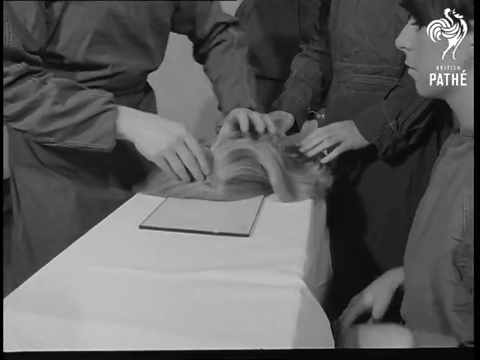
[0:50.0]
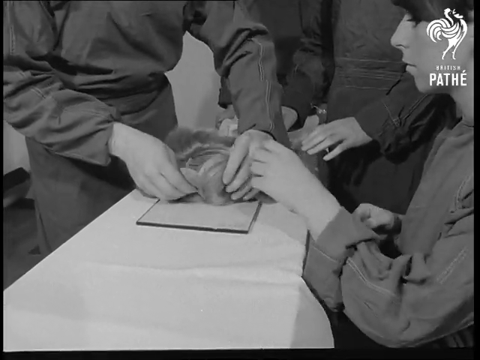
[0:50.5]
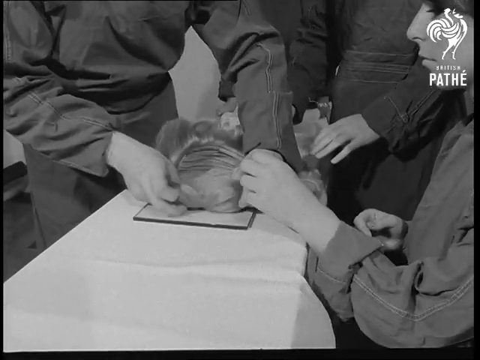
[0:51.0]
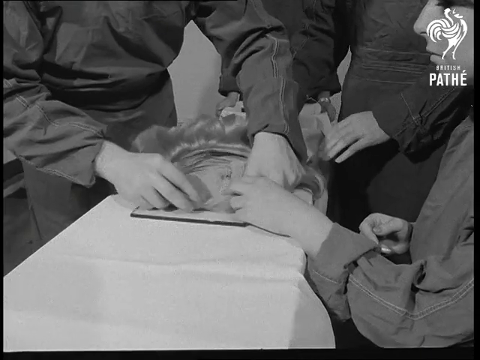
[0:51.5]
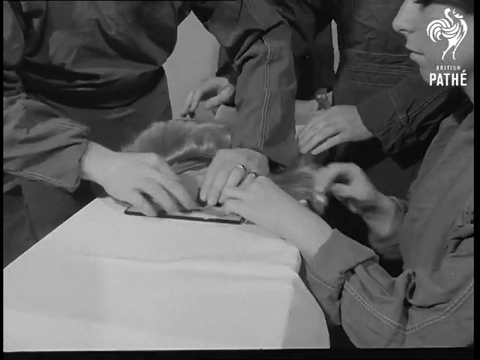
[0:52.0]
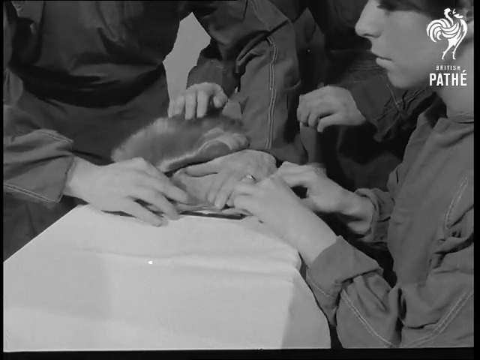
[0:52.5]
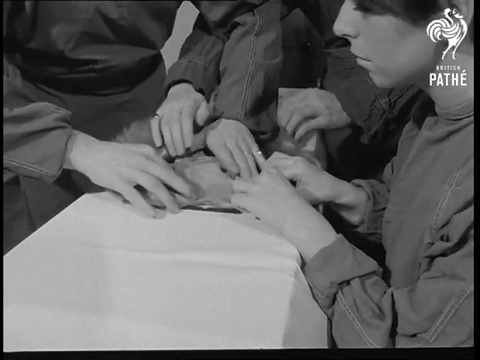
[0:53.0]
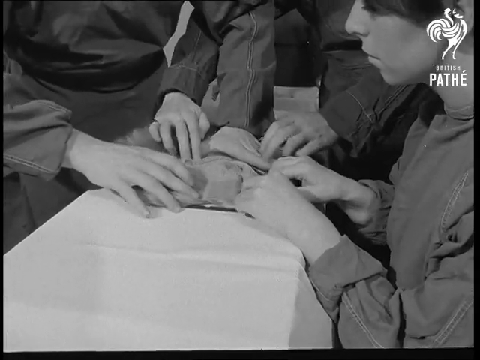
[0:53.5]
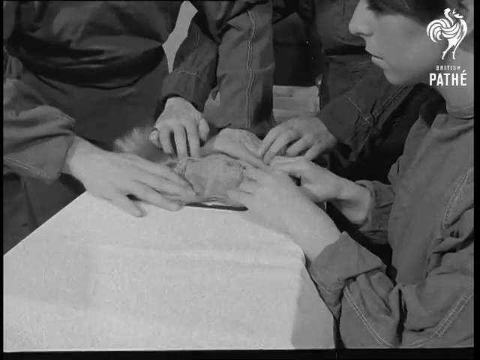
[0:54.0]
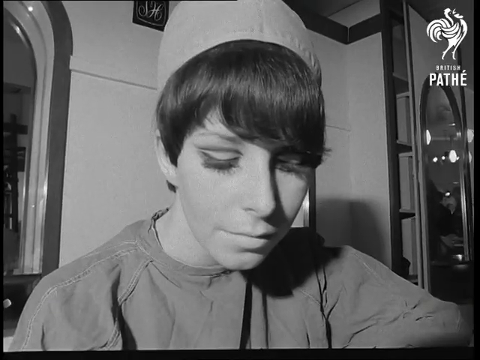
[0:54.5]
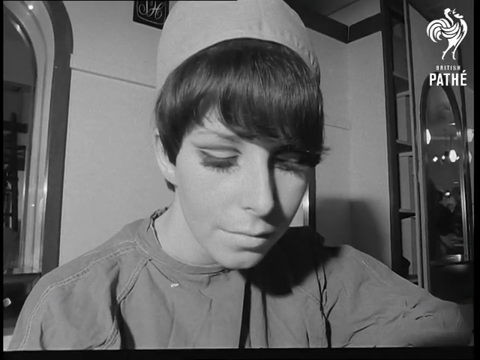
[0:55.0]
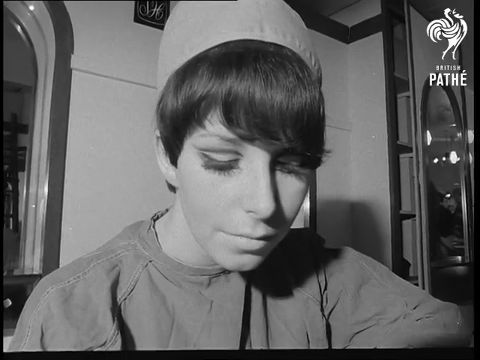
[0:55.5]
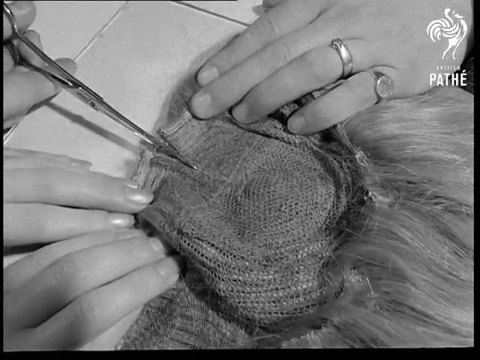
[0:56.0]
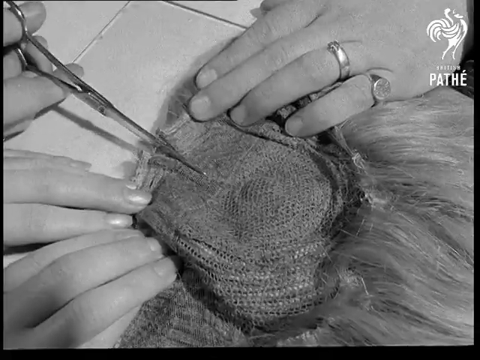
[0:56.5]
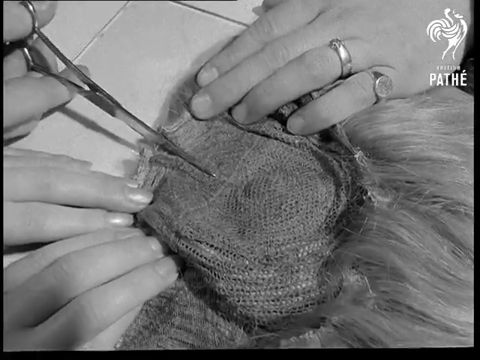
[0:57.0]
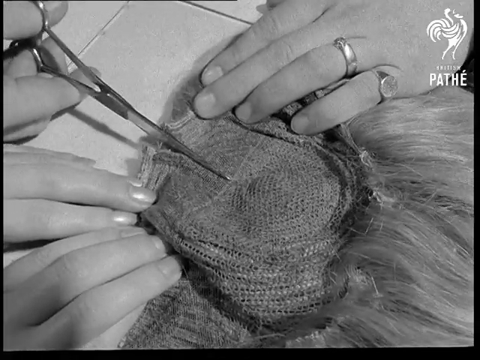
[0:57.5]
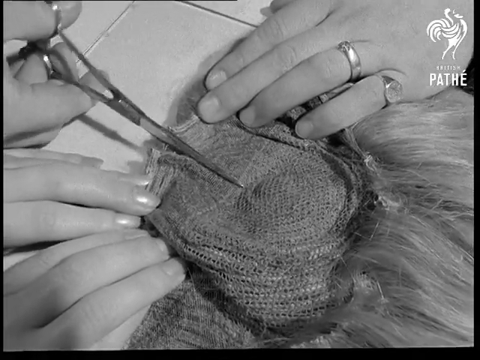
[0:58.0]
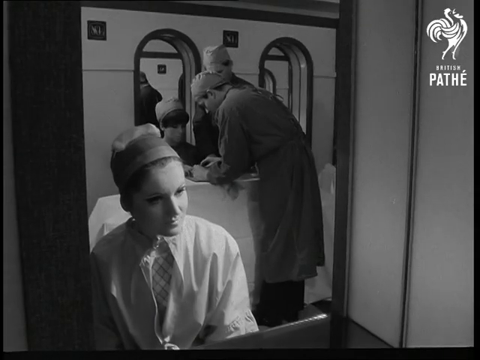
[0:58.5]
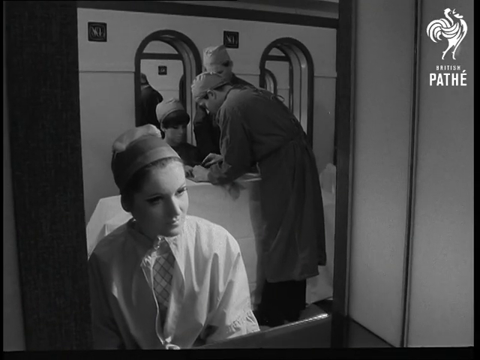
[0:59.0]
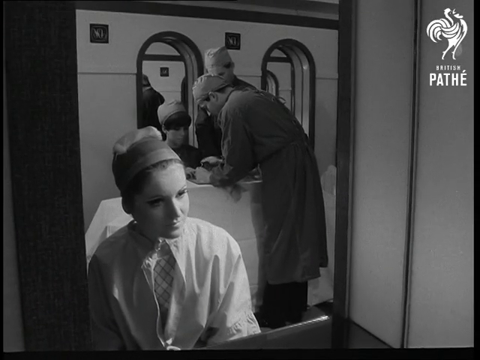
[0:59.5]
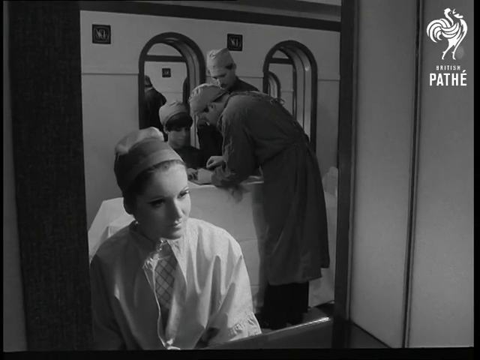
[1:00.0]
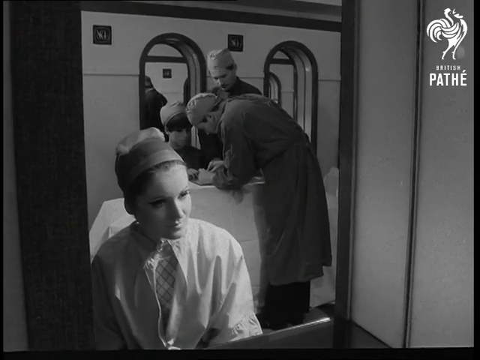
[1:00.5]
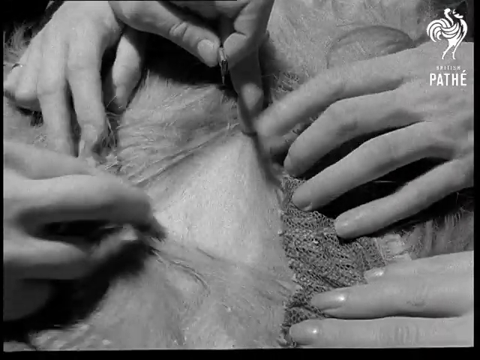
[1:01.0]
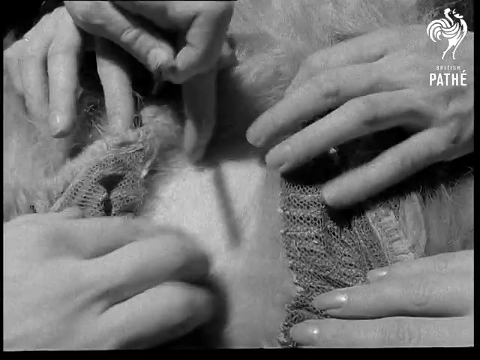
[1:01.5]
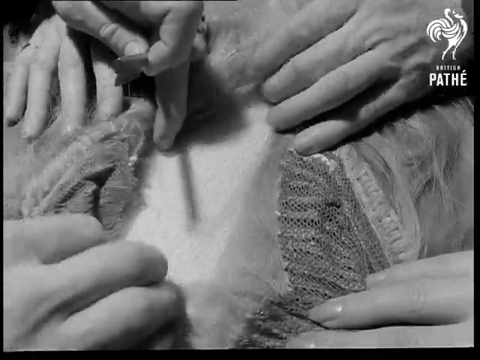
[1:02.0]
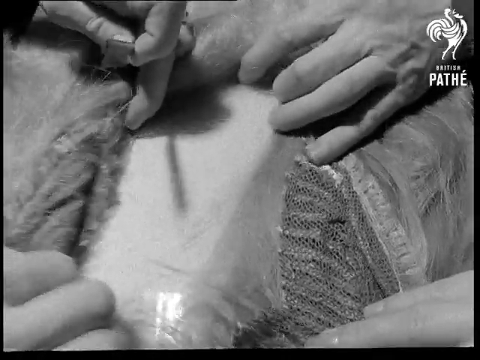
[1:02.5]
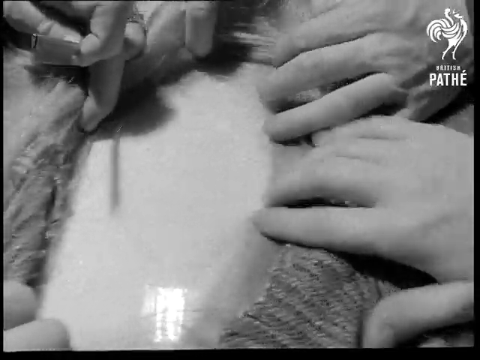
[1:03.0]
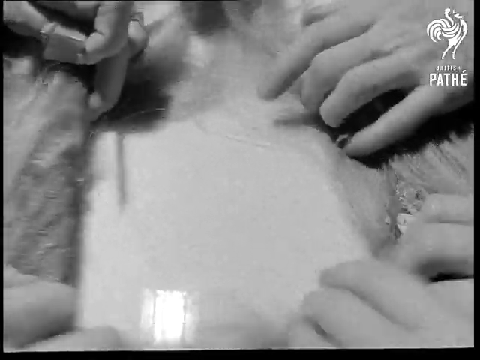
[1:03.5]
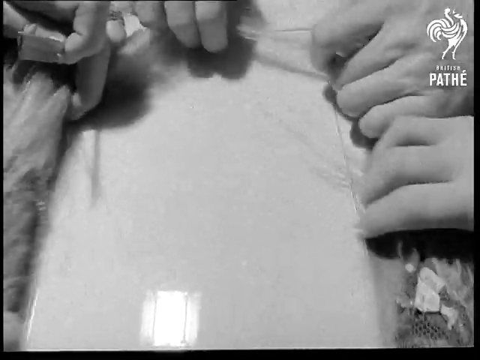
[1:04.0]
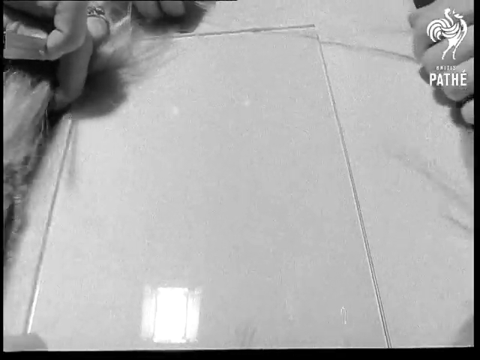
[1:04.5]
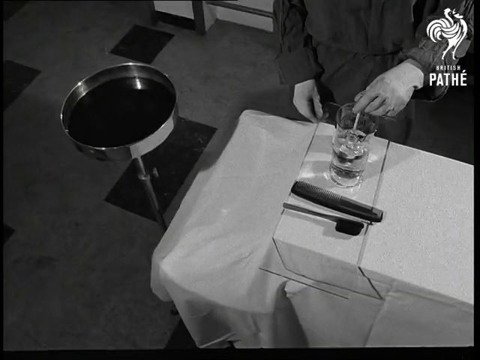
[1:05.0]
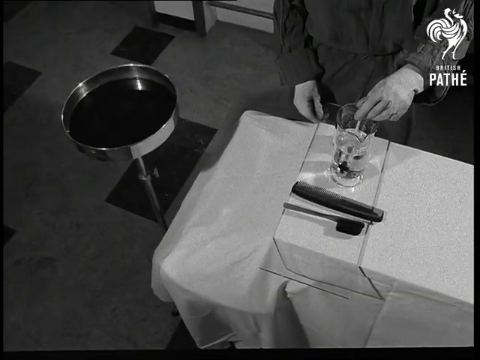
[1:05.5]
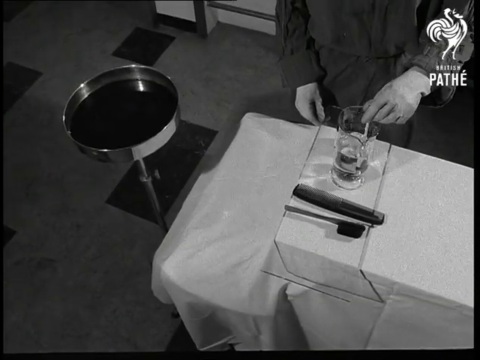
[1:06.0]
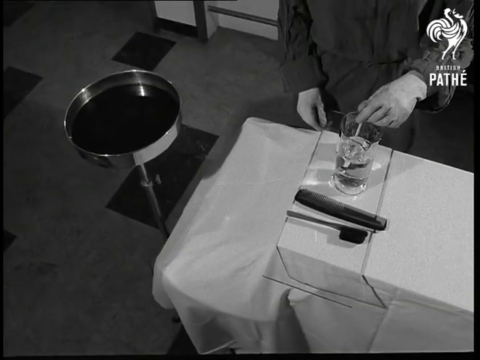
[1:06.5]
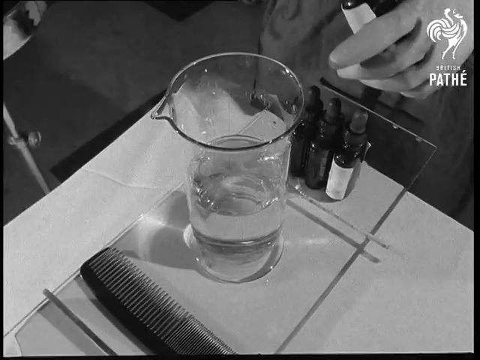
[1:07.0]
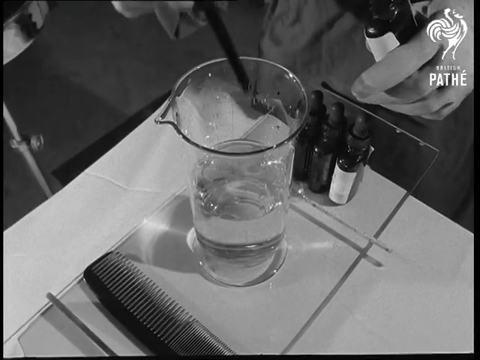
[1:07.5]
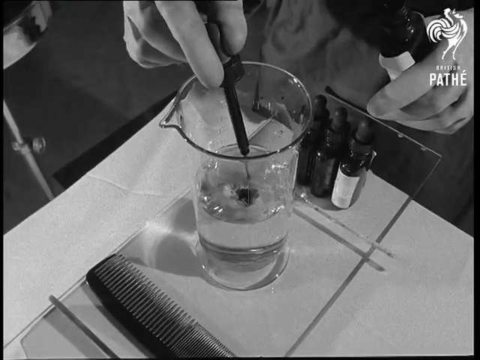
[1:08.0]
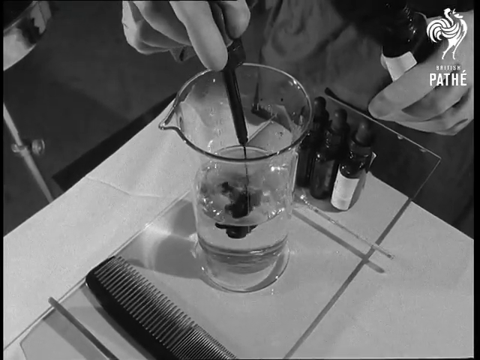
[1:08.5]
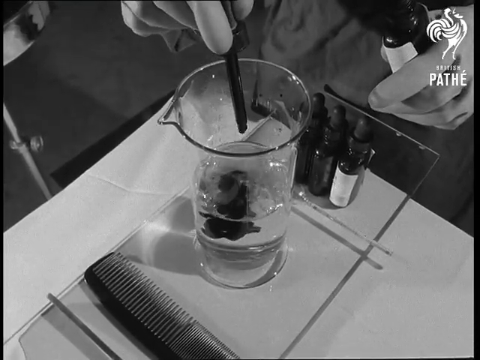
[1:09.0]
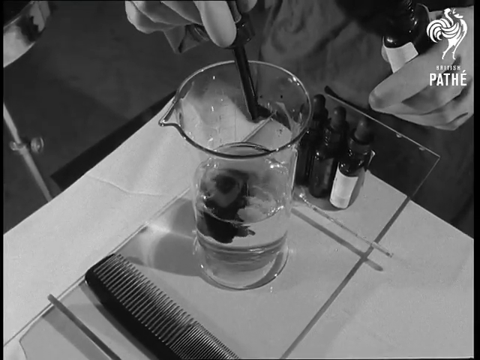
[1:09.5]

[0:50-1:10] The man in the surgical suit places the blonde wig on a table where three people stand. A woman on the right side, closest to the screen, sits down. She, the man in the surgical suit and the third person each hold the wig in a different location, as if to make it lay flat. A close-up shows a woman with short dark hair and long eyelashes wearing a surgical hat, looking down. An overhead shot shows multiple hands holding the wig, and one hand begins cutting the wig from the top. The young woman who was wearing the wig sits in front of a mirror, watching in it the wig operation behind her. Another close-up shows the wig being operated on, and it has been cut into two pieces. An overhead shot shows a glass of water as dye is dropped into it.